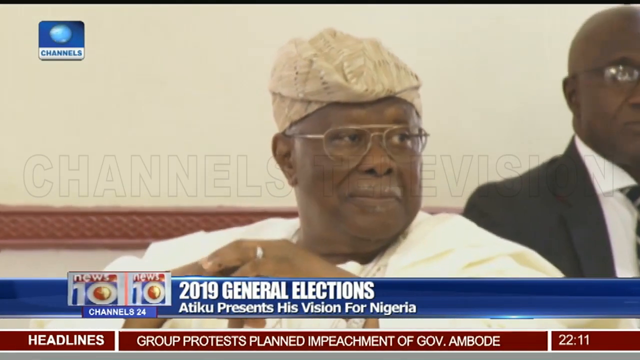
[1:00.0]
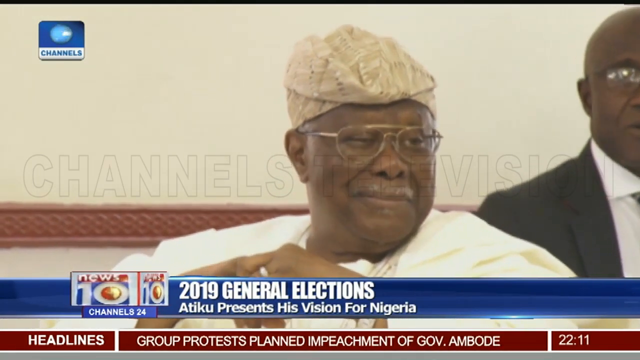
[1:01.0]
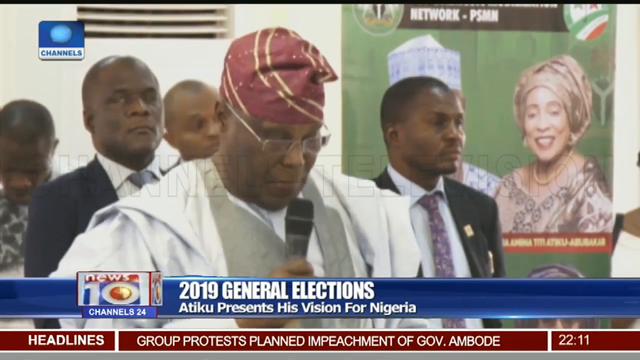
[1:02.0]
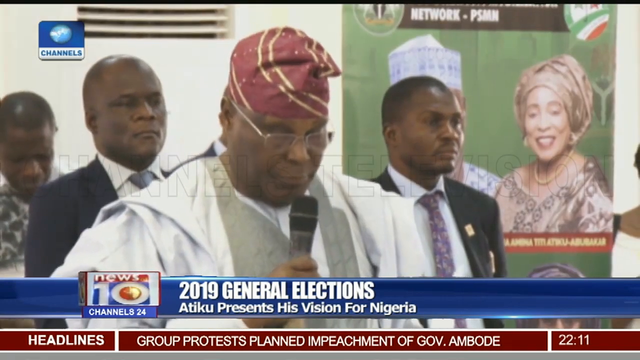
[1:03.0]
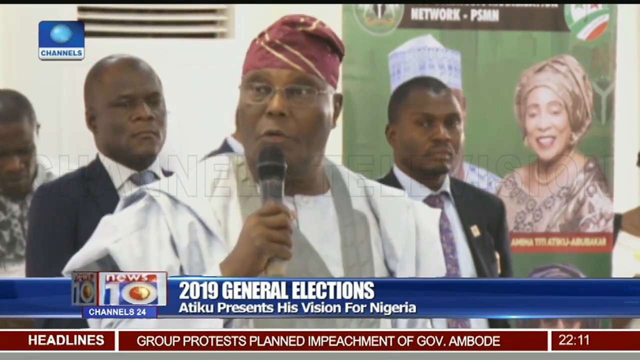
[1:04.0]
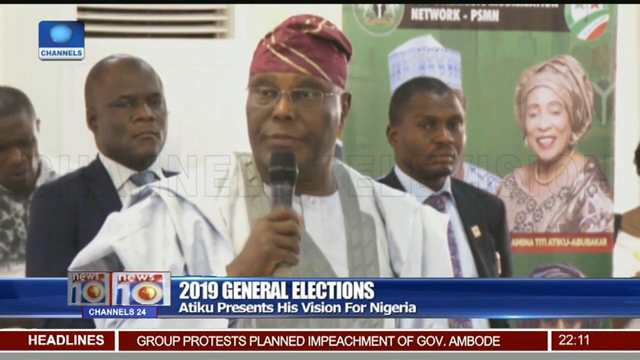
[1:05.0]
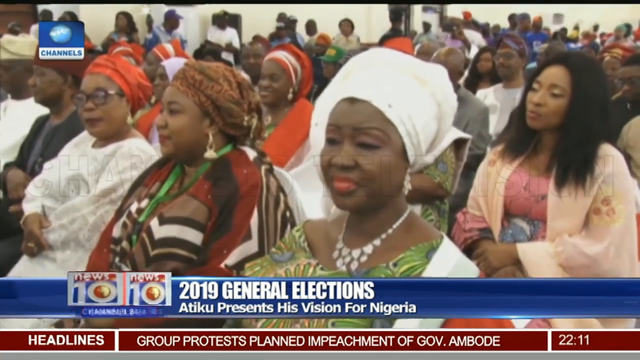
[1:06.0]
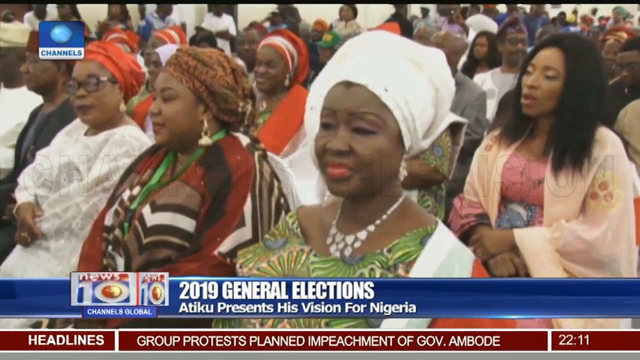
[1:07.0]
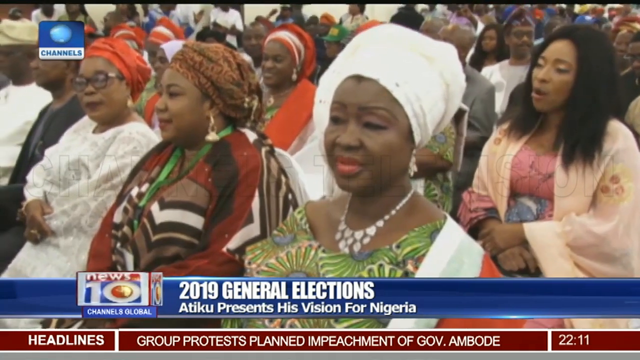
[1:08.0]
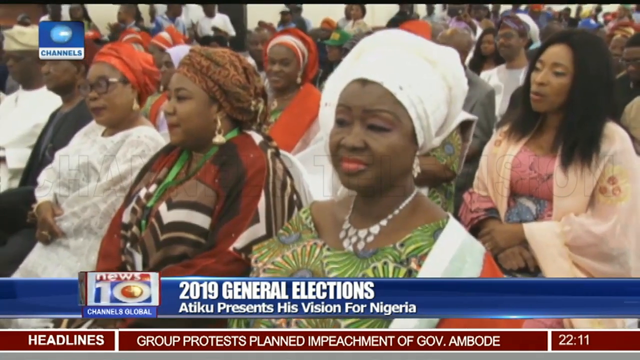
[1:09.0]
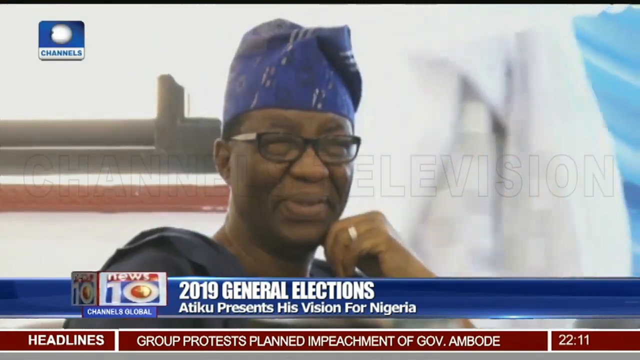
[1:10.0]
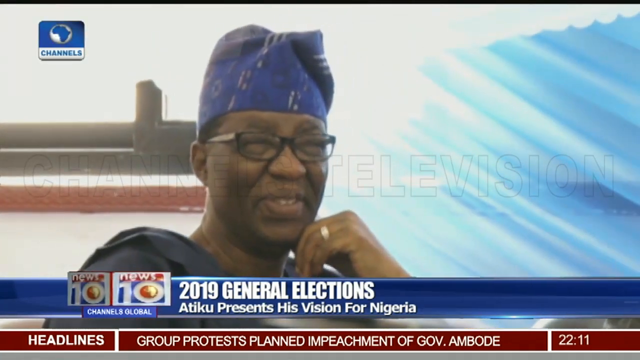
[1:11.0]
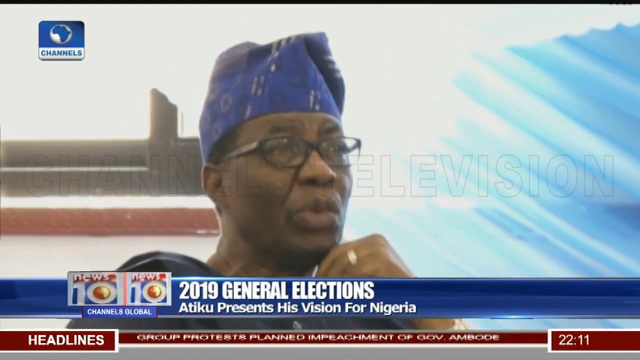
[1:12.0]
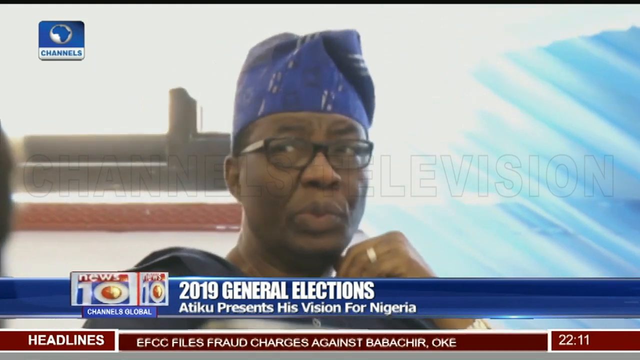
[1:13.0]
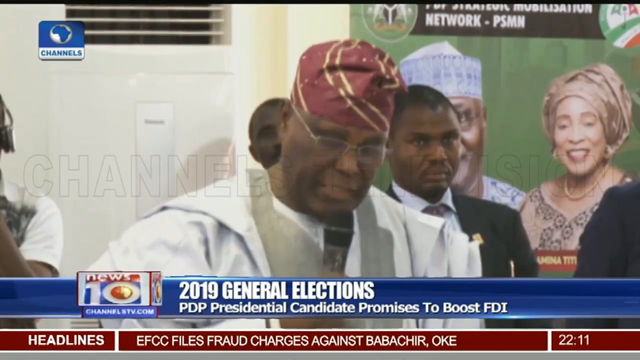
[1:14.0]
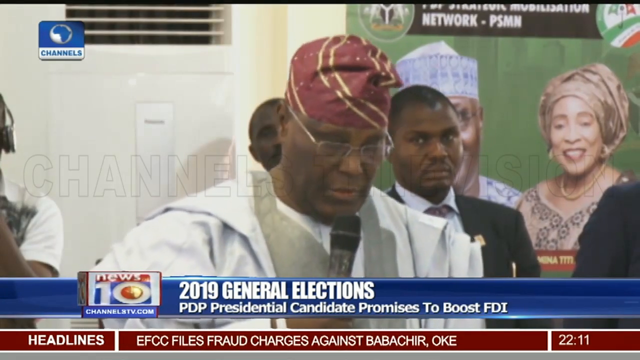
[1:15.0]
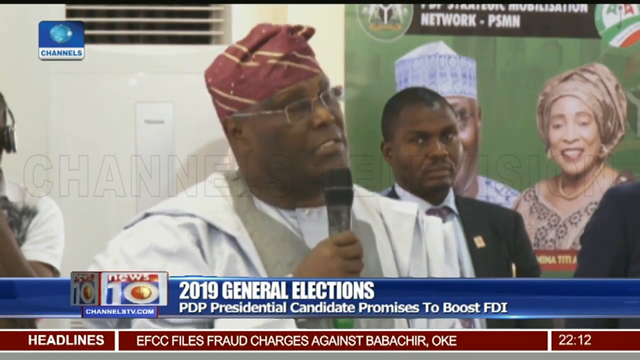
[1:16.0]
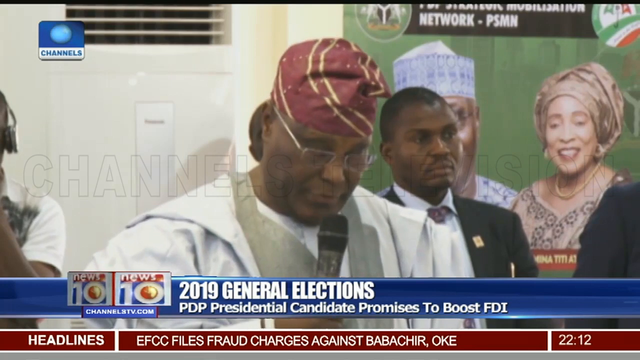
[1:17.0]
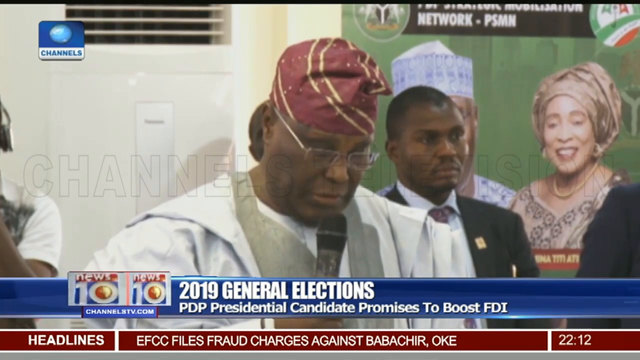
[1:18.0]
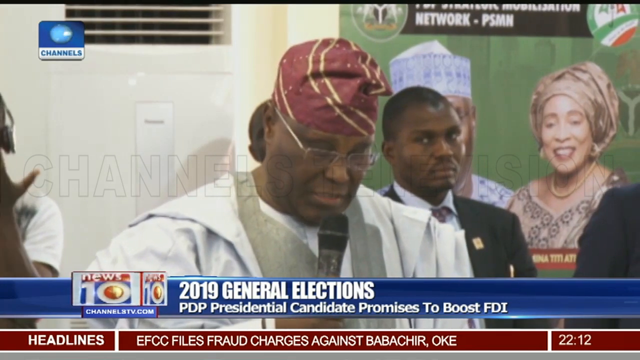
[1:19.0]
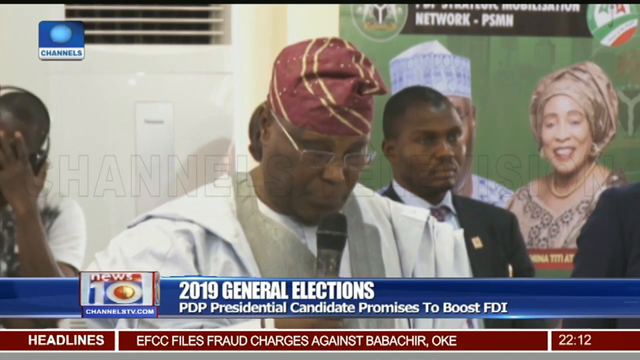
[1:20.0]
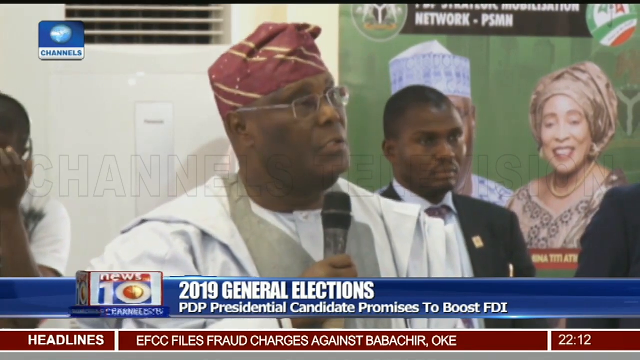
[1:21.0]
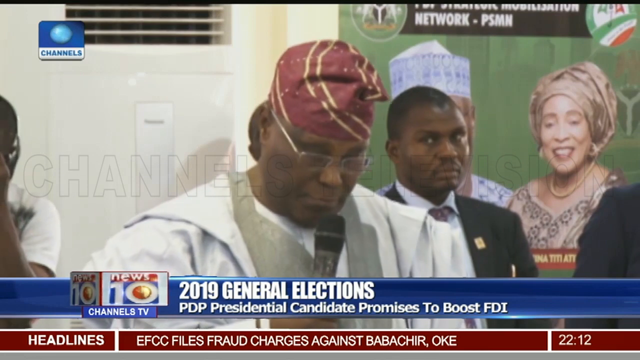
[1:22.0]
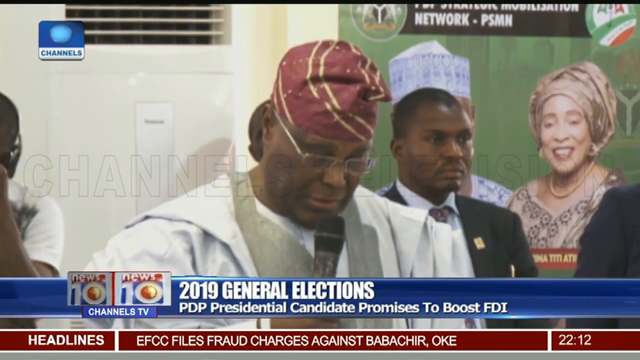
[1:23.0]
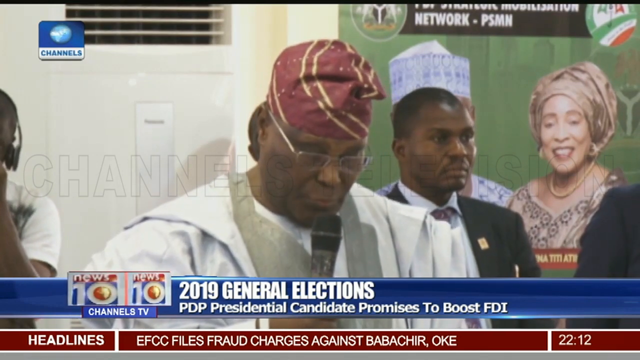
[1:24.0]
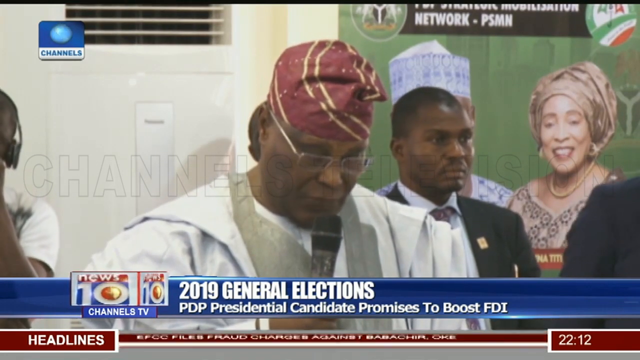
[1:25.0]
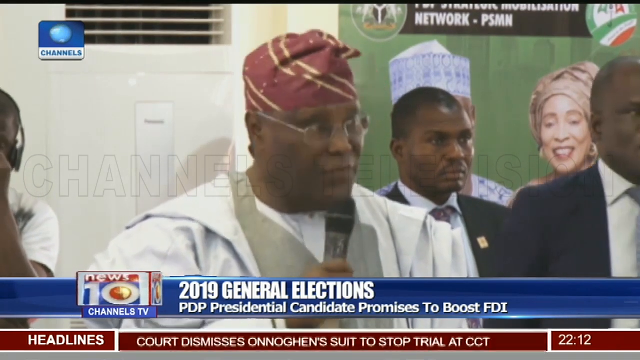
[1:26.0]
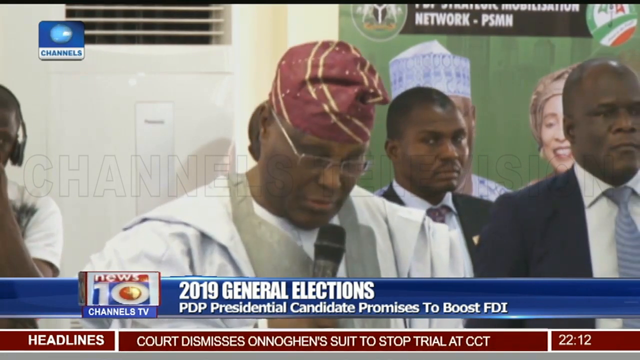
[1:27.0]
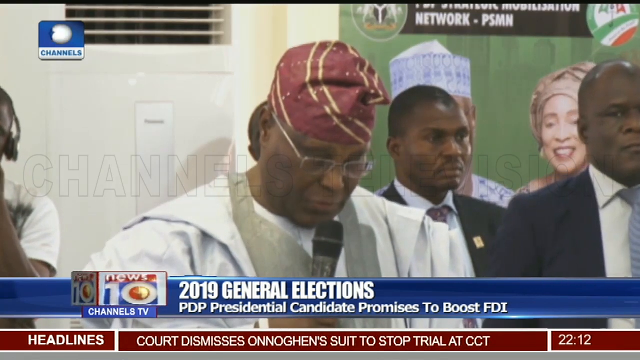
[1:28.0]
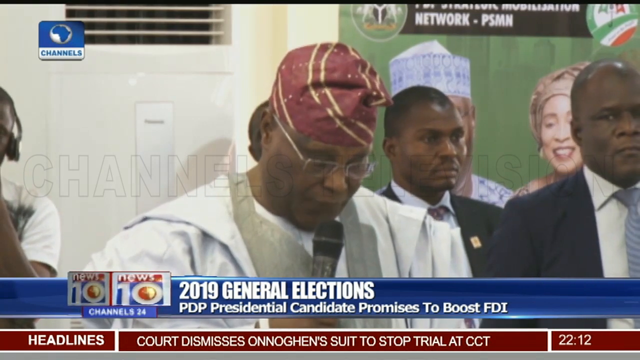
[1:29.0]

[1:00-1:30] Many women are standing and sitting on seats, looking happy. The first woman on screen wears a white dress covered by green on top. Another woman wears an orange dress covered by red, with striped lines of white and black around the dress. A man wears a black t-shirt and white trousers. Other women wear wigs, and one at the back wears an orange t-shirt with a pink dress inside. They all seem happy and are smiling. Next to the woman with the wig, an old lady in a green dress is smiling.